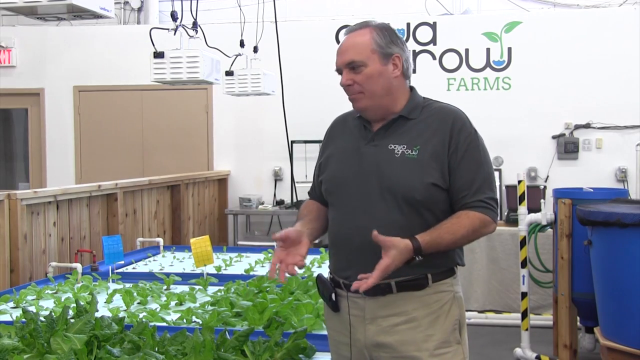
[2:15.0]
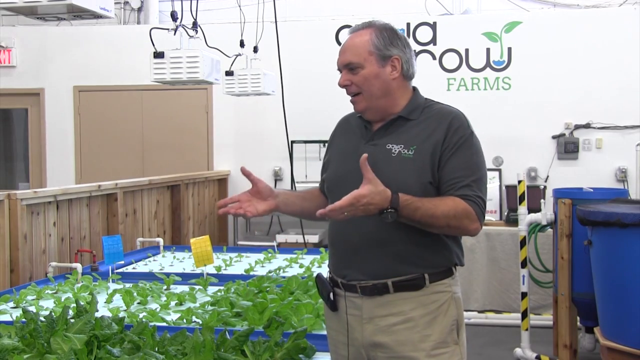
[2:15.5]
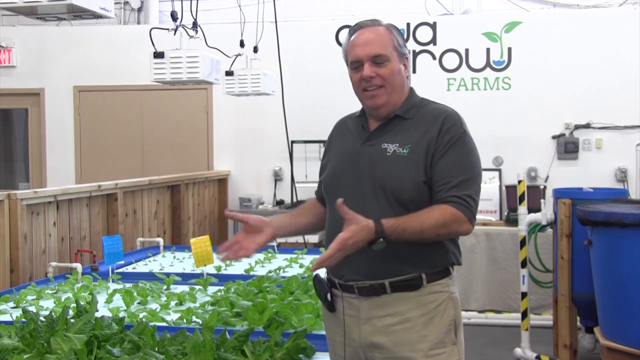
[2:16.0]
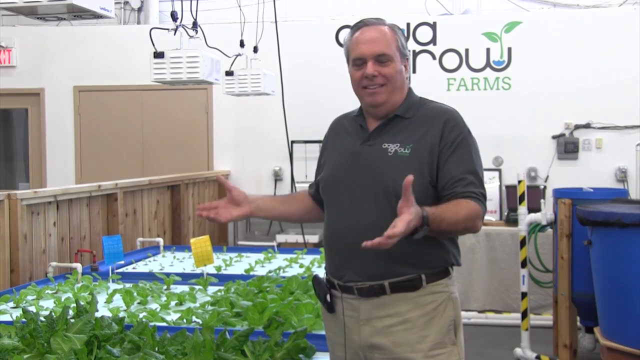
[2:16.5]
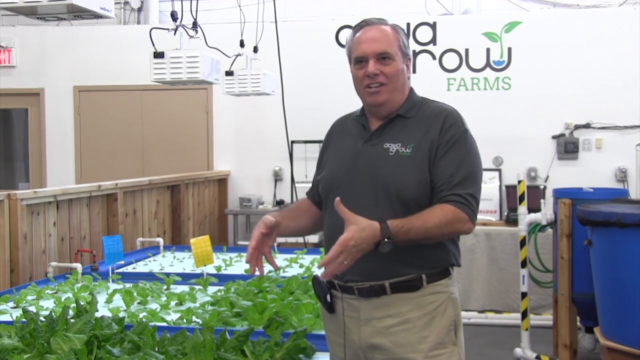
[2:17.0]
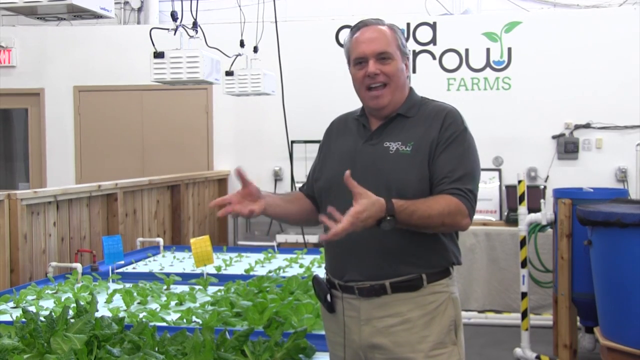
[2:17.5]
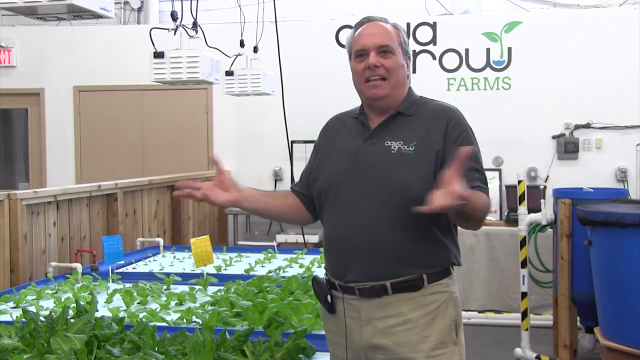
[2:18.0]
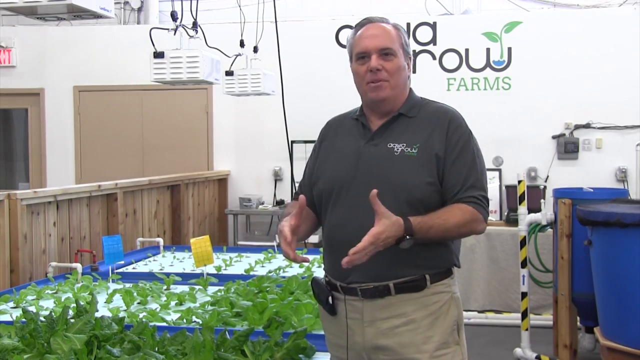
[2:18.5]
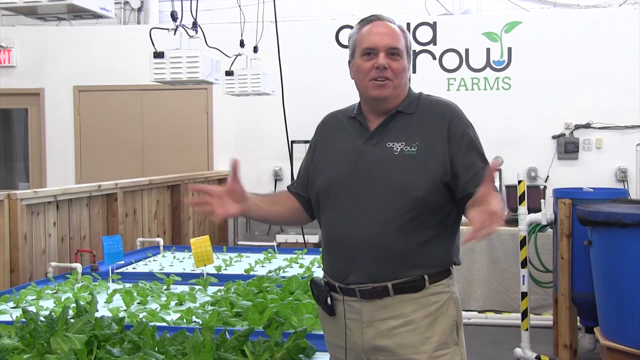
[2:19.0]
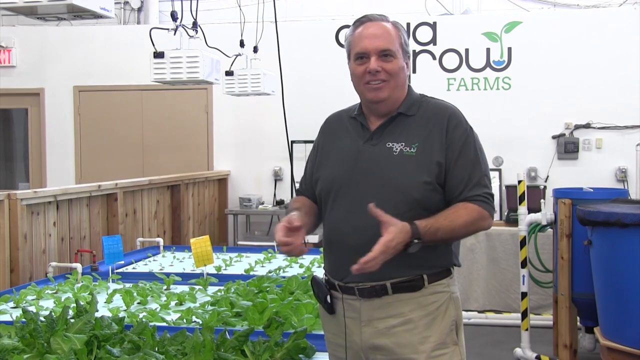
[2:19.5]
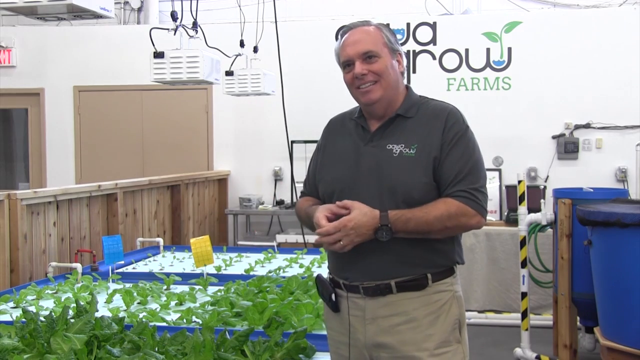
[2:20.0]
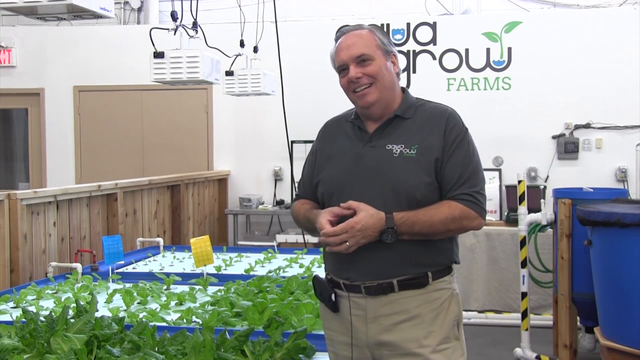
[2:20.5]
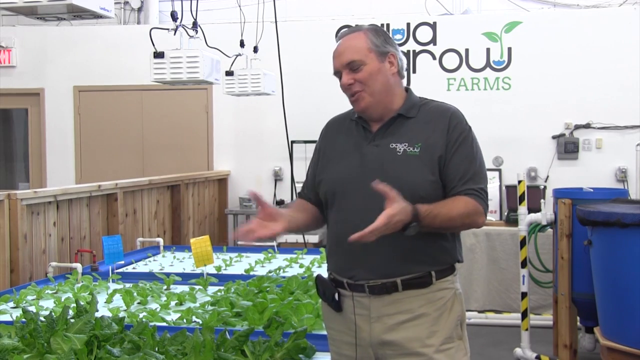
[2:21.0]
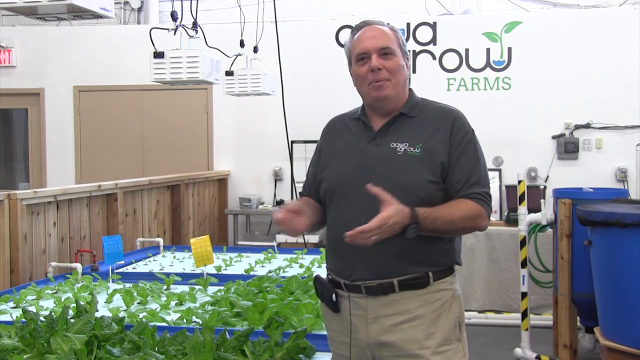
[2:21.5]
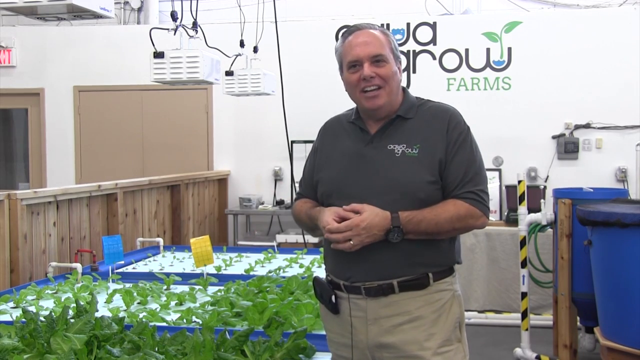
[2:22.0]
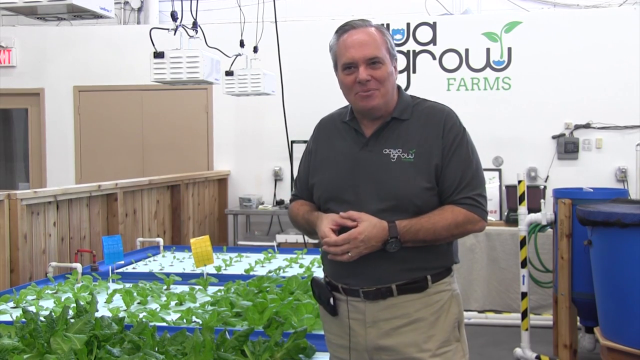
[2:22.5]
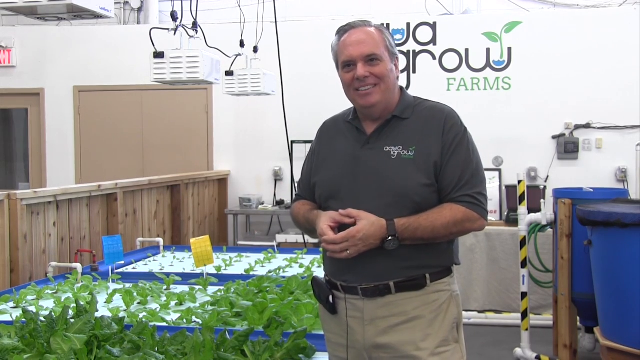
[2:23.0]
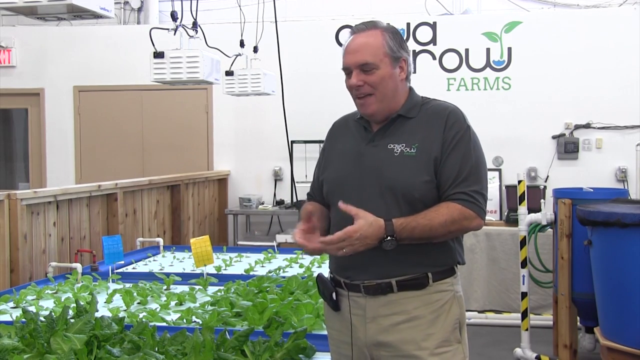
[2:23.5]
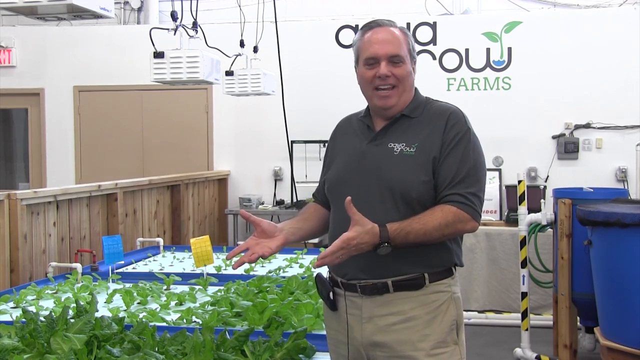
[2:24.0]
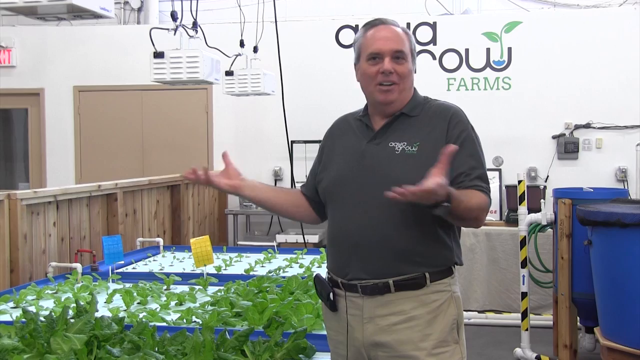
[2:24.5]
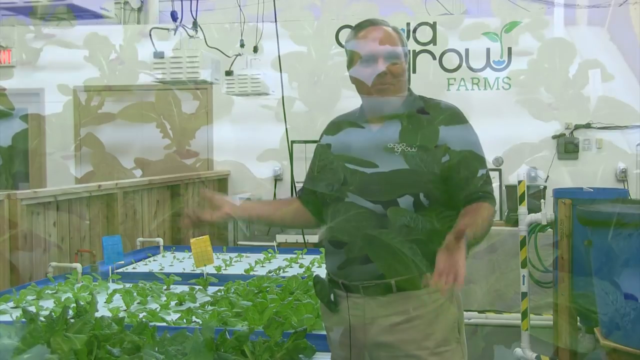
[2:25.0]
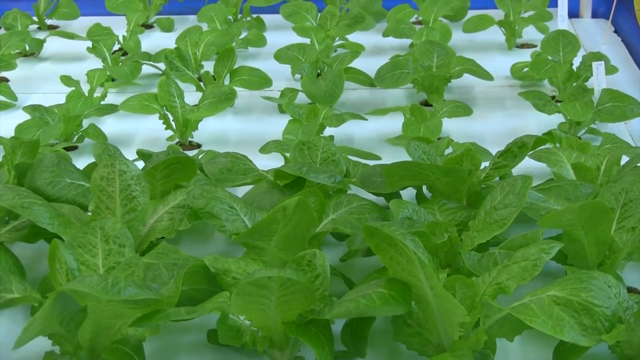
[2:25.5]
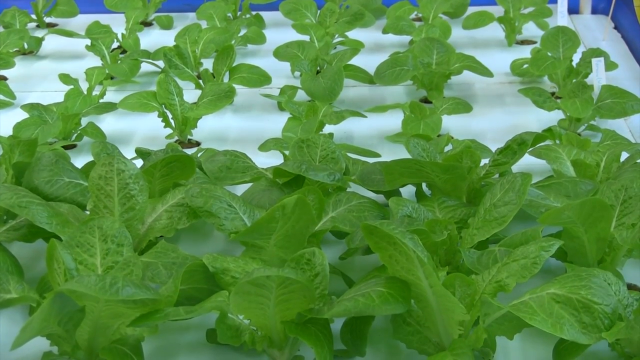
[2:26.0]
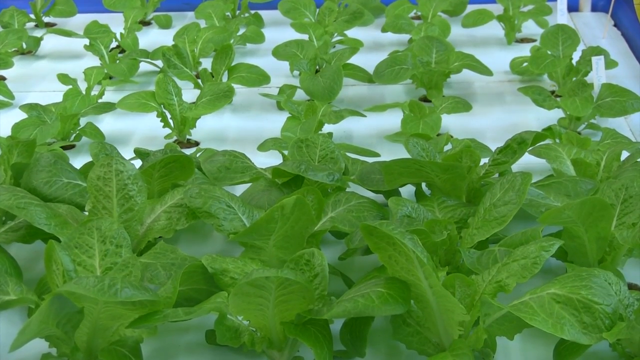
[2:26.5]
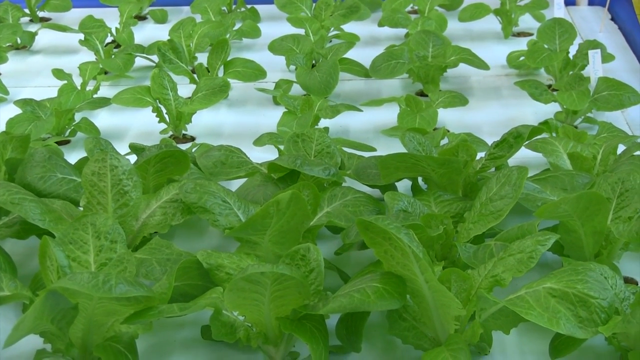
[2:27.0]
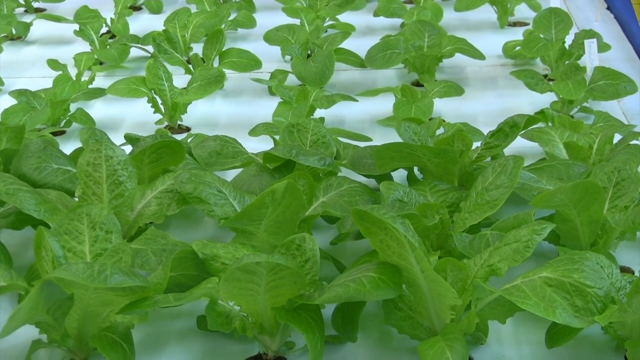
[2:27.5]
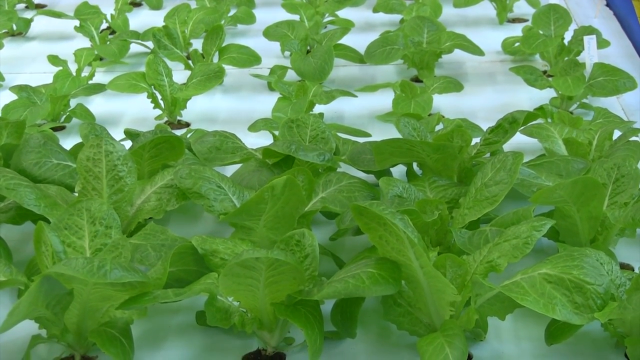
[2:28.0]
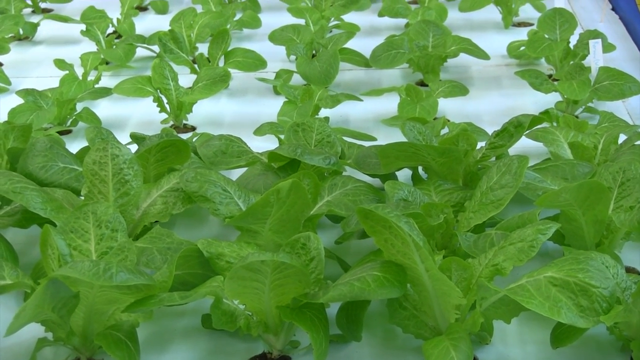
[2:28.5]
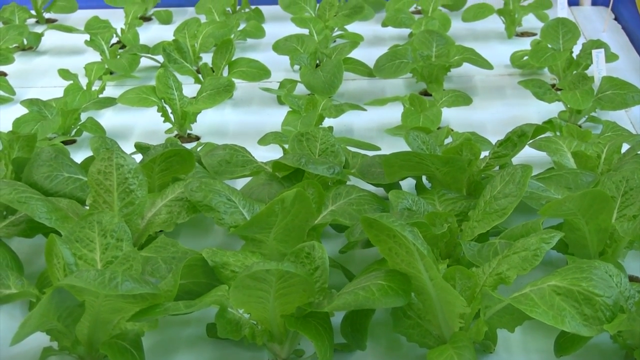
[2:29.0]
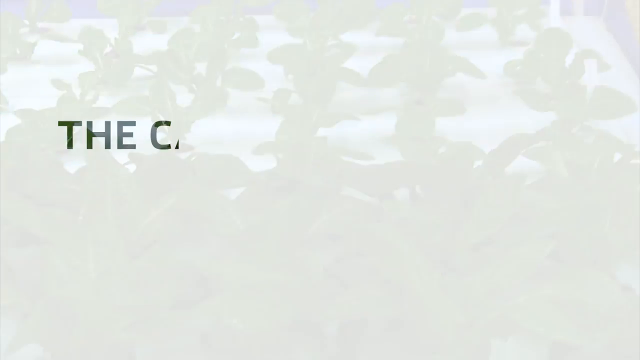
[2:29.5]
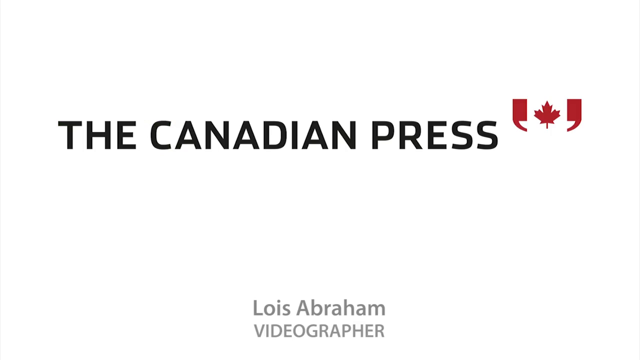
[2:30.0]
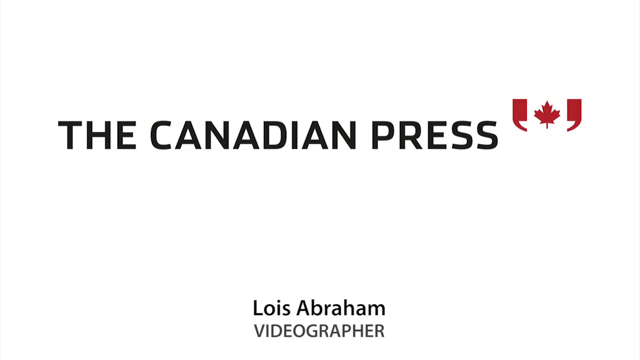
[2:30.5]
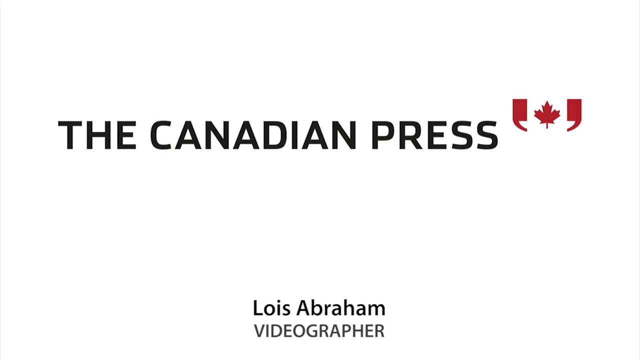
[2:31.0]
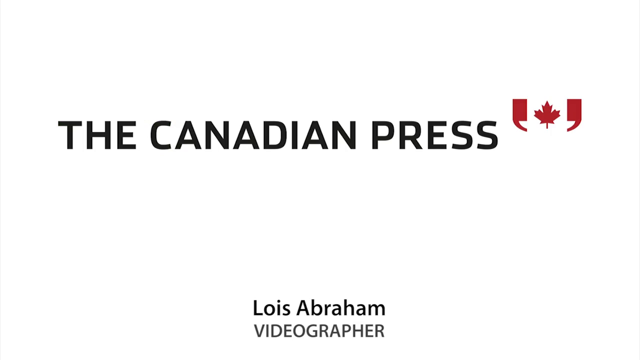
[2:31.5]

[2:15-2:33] The Aqua Grow Farms employee talks and gestures rather wildly with his hands. He wears a big black watch with a black plastic band and a wedding ring. A couple of white, boxy grow lights hang above the trays, with black cords leading up to them on the ceiling. Toward the lower left corner is a circle with "The Canadian Press" inside it and a Canadian flag-style design: a red maple leaf in the center between a reversed red comma and a regular comma, looking like a maple leaf flag with two small tails curving down underneath. The fish tanks, a couple of brown doors and an exit sign are visible in the background. The man is clearly excited and smiling. A close-up shows the young plants on the trays. The end screen is a white background with The Canadian Press and the same maple leaf logo up and to the right, and black text at the bottom reads "Lois Abraham Videographer".